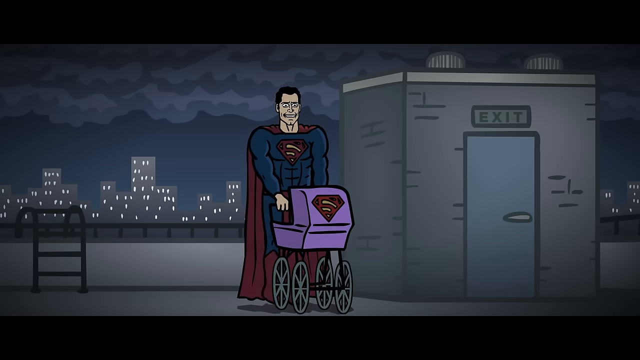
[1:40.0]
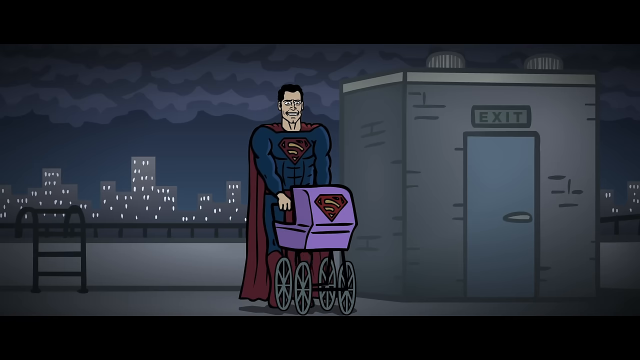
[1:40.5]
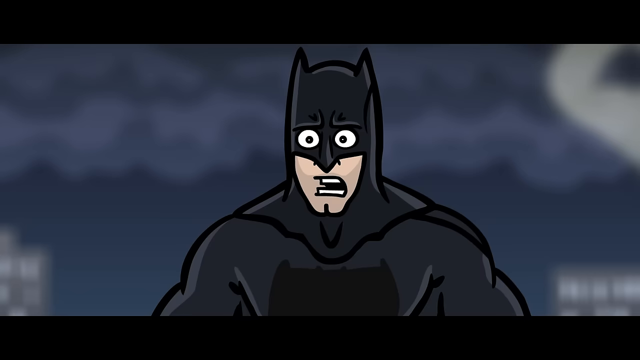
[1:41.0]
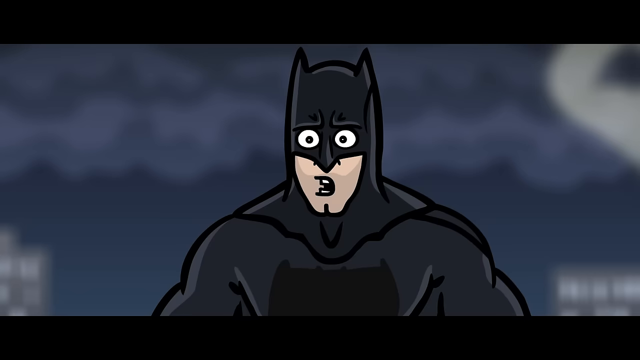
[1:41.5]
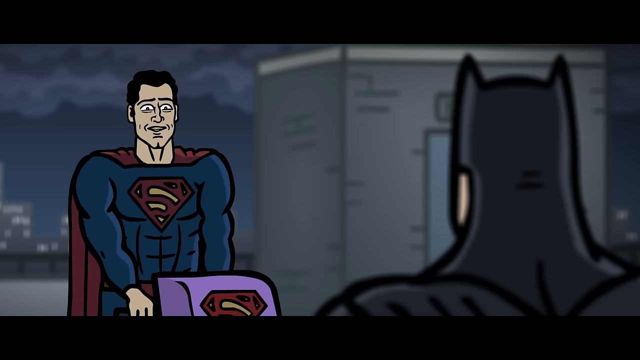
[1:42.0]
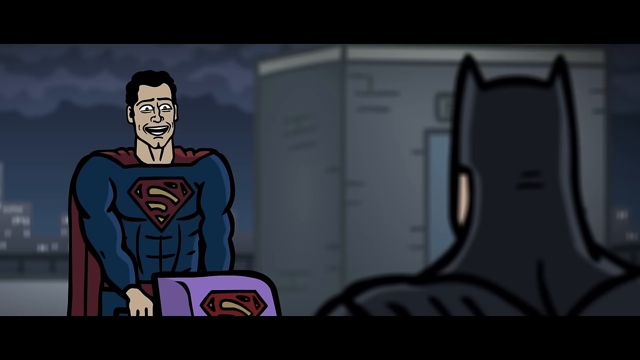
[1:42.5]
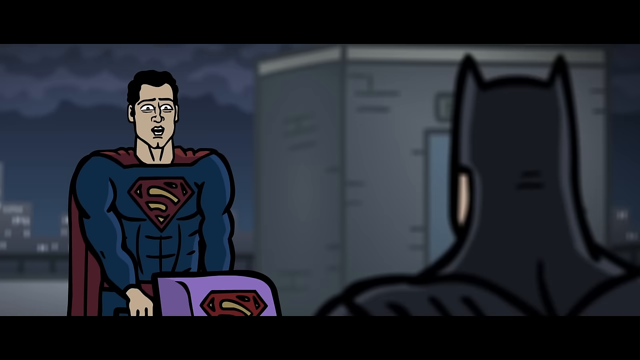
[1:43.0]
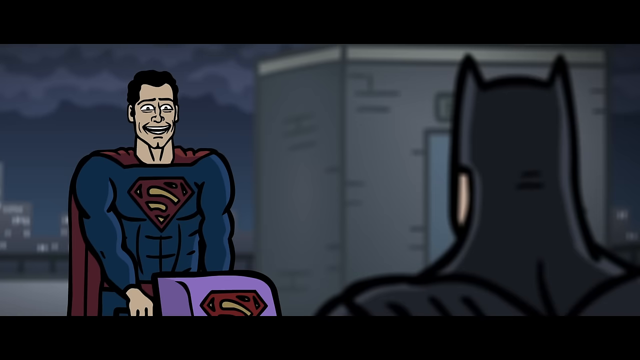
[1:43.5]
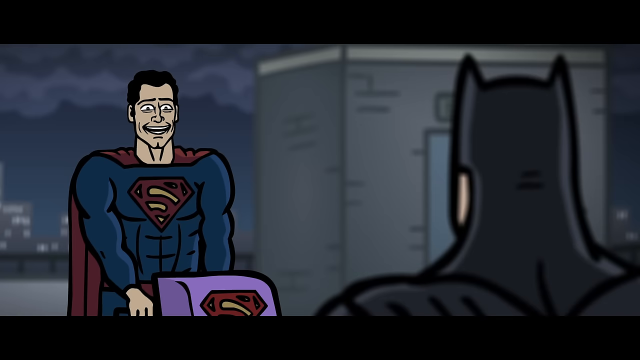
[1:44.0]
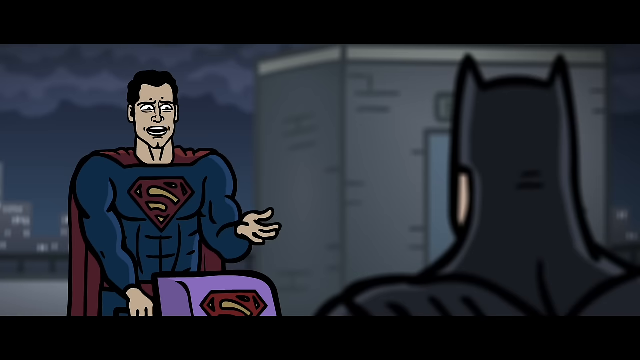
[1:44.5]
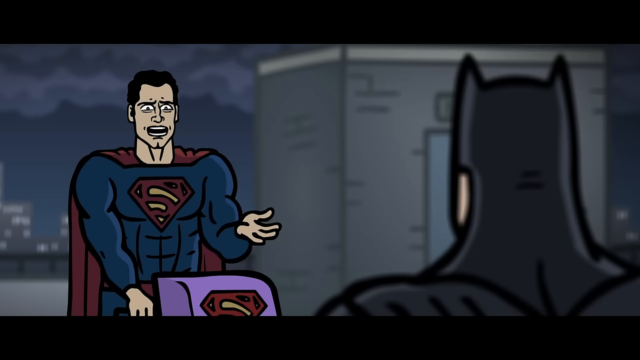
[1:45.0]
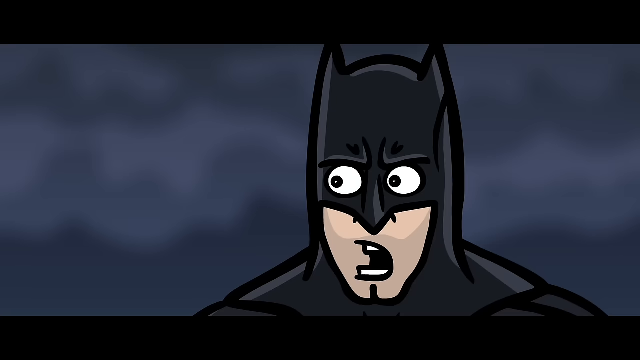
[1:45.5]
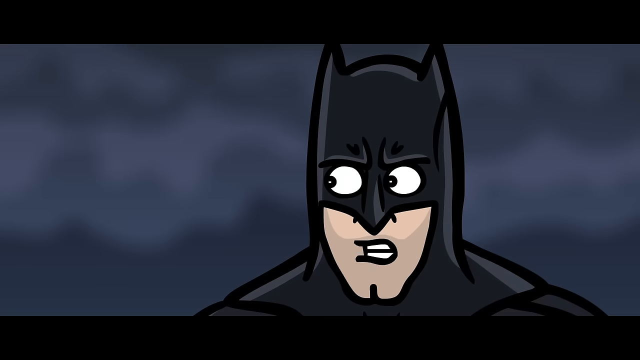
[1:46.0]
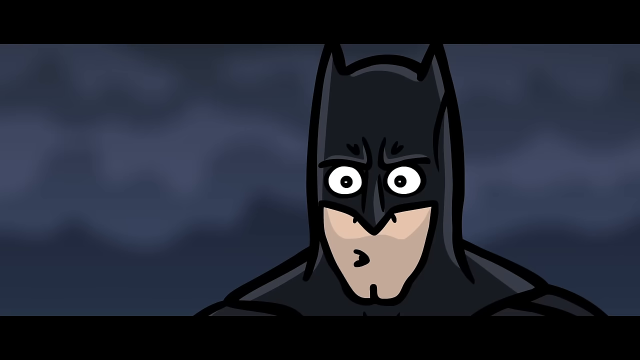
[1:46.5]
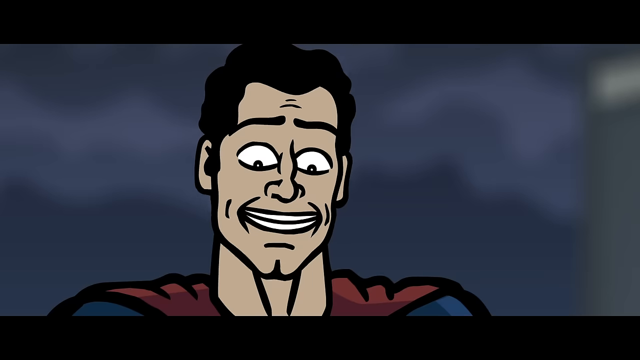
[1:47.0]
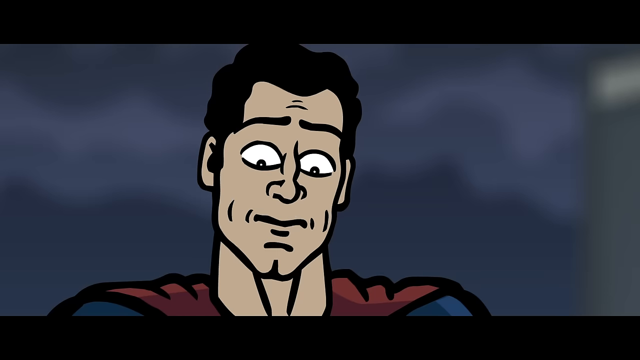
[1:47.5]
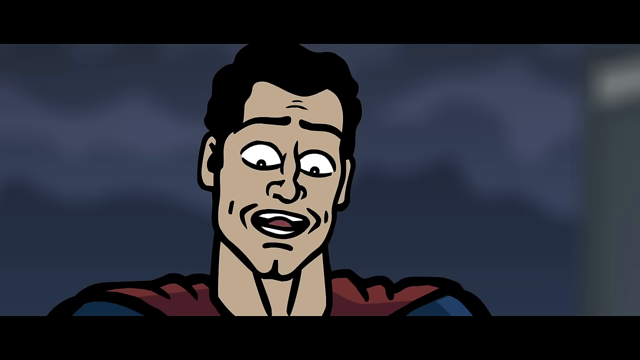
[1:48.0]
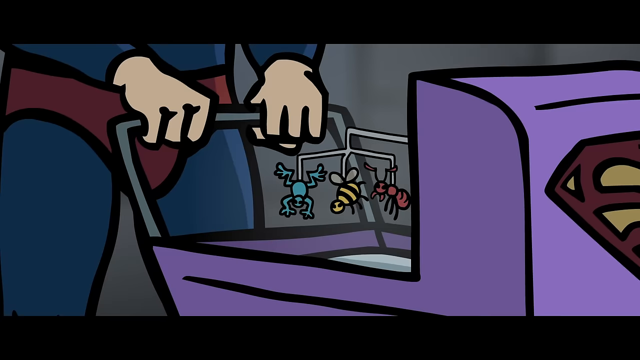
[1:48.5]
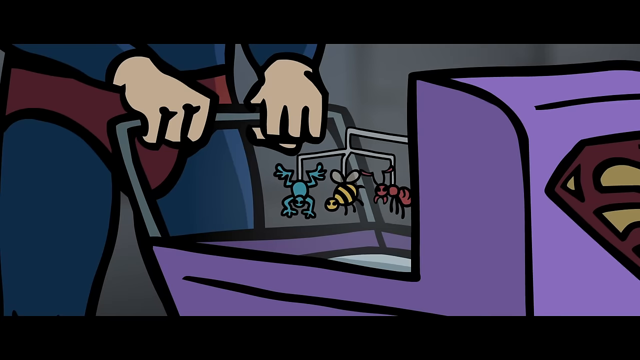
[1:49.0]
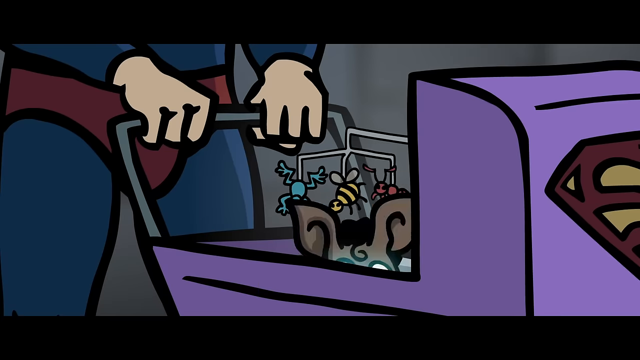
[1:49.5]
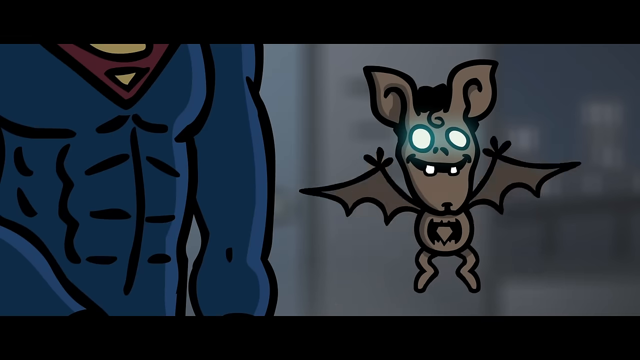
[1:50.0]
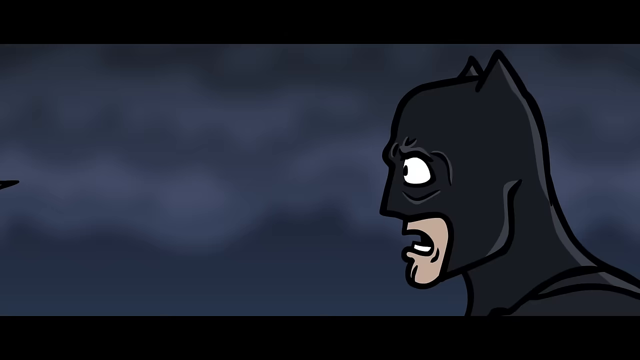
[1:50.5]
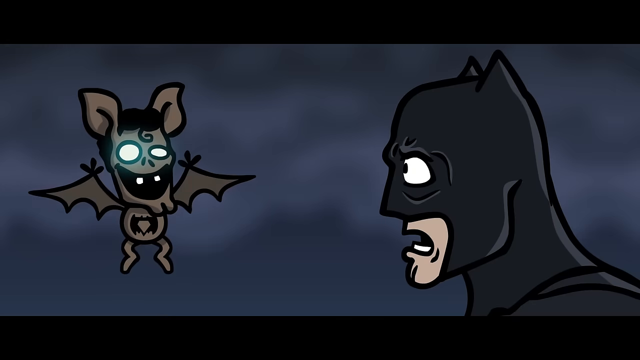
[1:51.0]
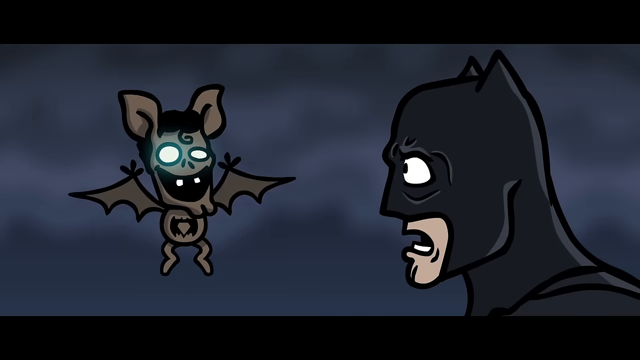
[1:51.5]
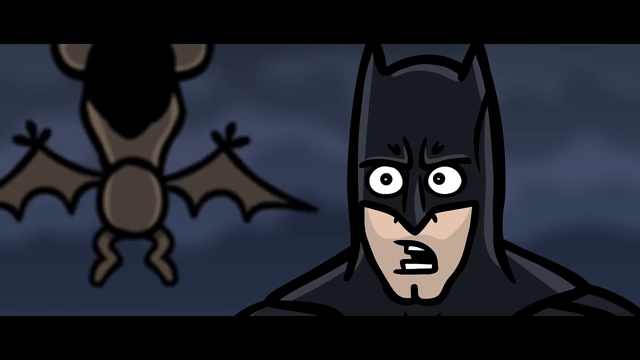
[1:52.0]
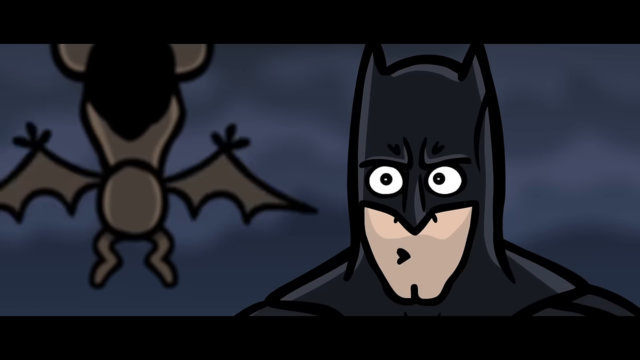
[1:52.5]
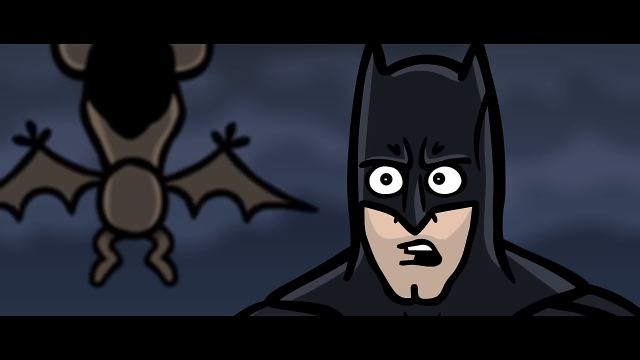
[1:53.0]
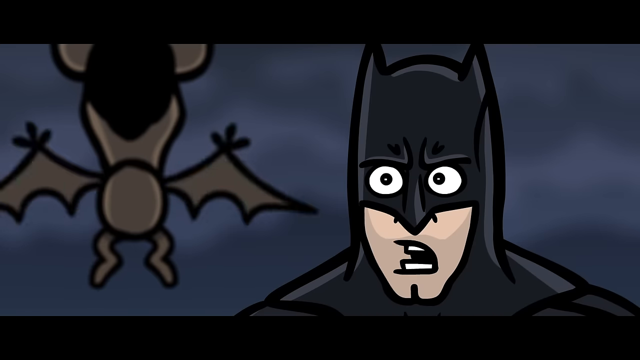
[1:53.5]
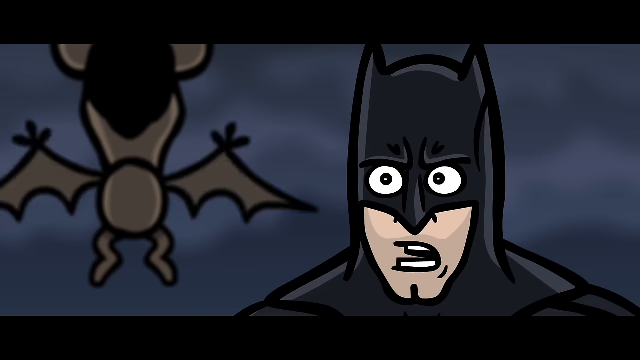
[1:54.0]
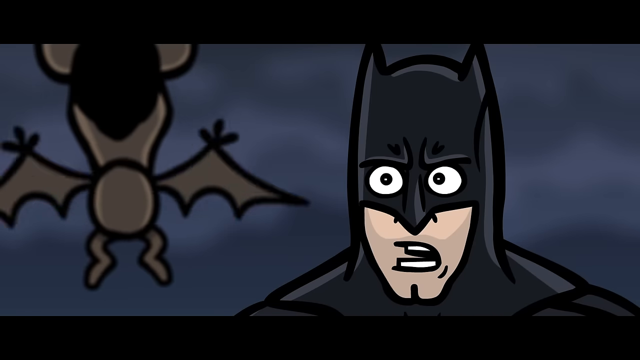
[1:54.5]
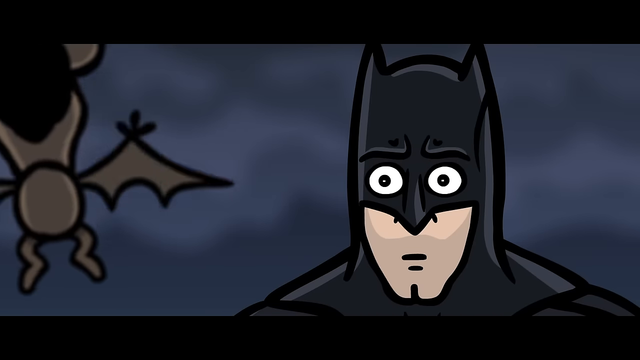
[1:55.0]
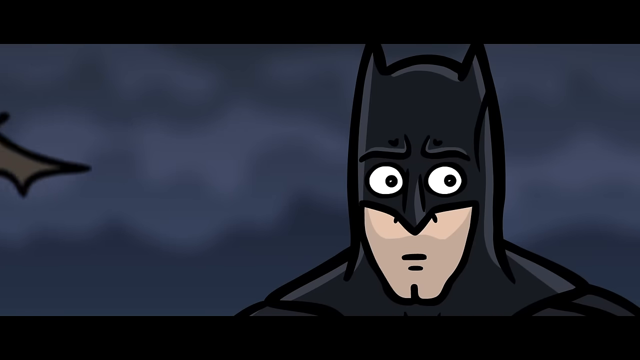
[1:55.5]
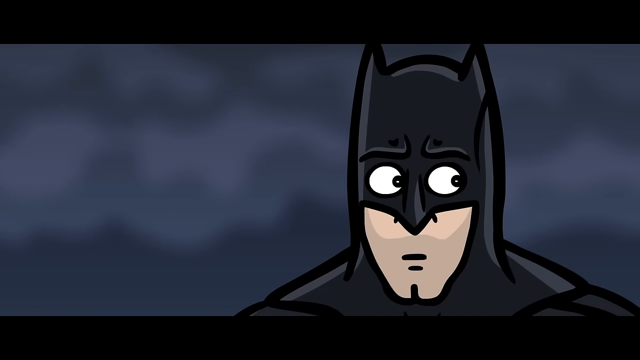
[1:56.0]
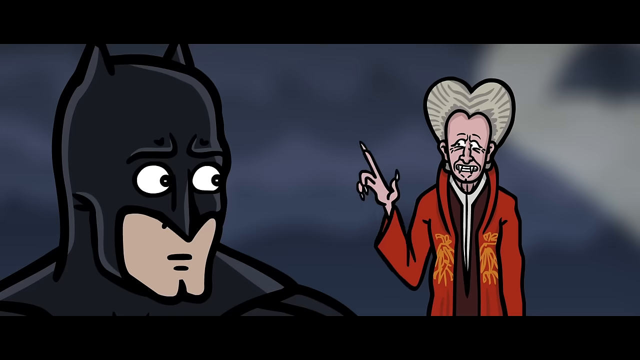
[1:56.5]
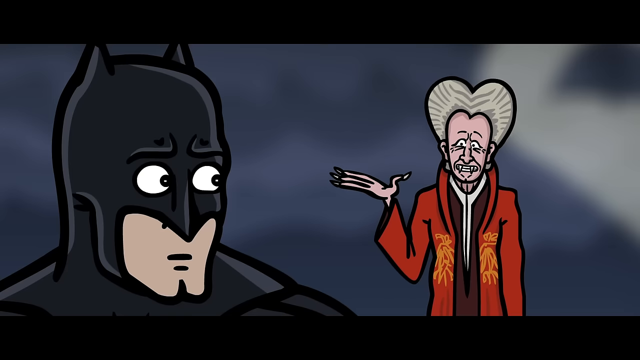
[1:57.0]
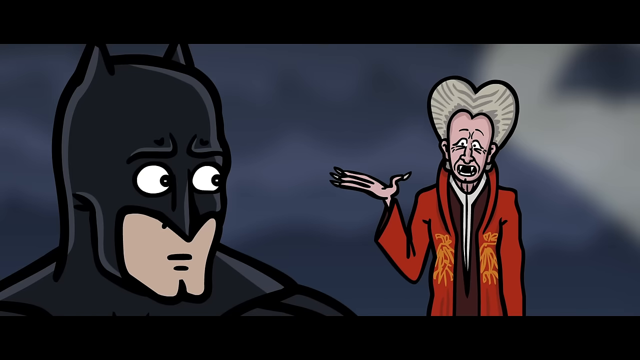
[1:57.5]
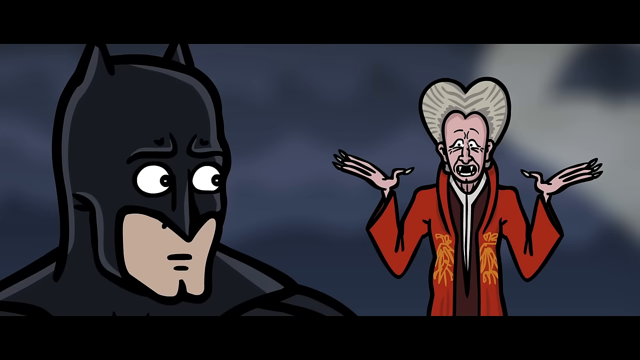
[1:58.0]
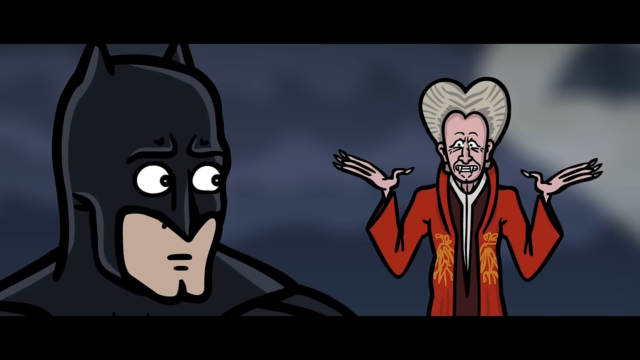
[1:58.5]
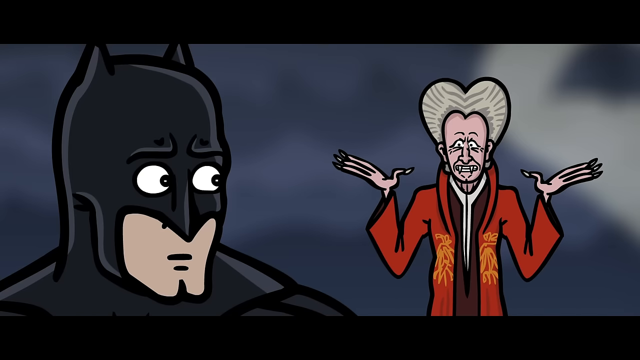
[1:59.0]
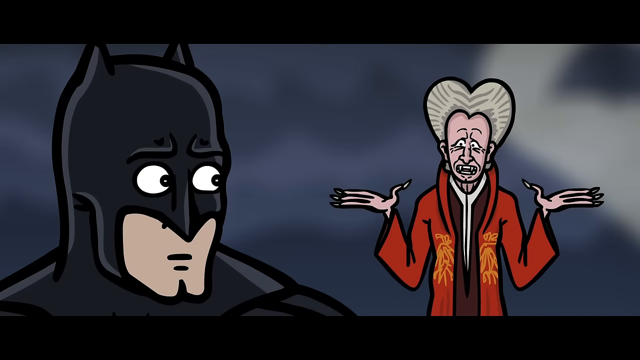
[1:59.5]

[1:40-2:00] Superman stands on the rooftop next to the exit door, pushing a purple stroller with a Superman symbol on it and four wheels, like a baby buggy. Batman has a very surprised look on his face. Superman smiles and talks while standing behind the stroller. Batman's eyes are wide open as he talks, as if bulging out of his head. Superman looks down at the stroller as he talks, and part of the stroller comes into view, showing a mobile with some toys. A baby bat flies up out of the stroller. It is grayish-brown with a Batman symbol on its chest, two teeth sticking out like fangs, glowing white eyes, and a little black hair on its forehead with a squiggle of hair coming down. Flapping its wings, it flies over to Batman, who then talks to the baby bat.